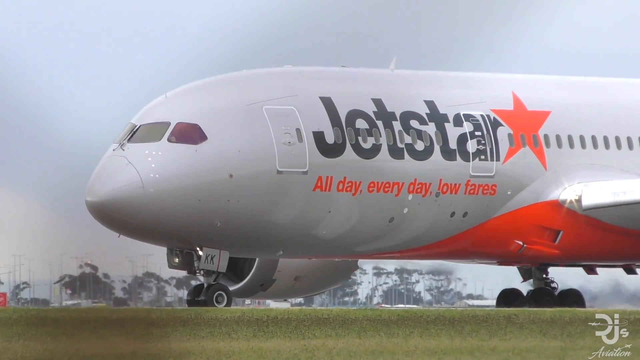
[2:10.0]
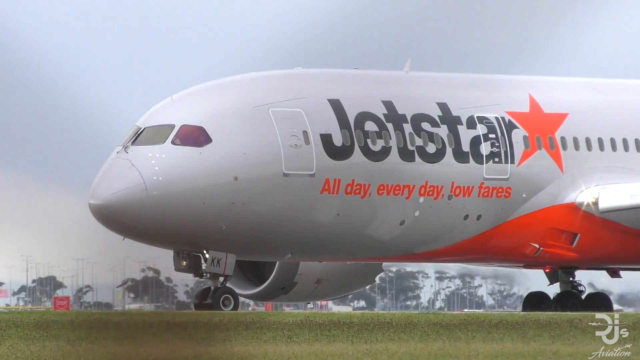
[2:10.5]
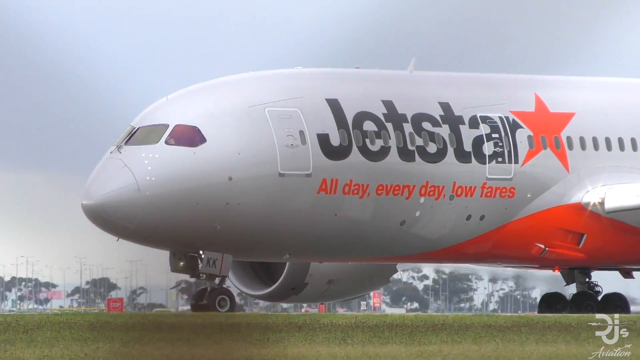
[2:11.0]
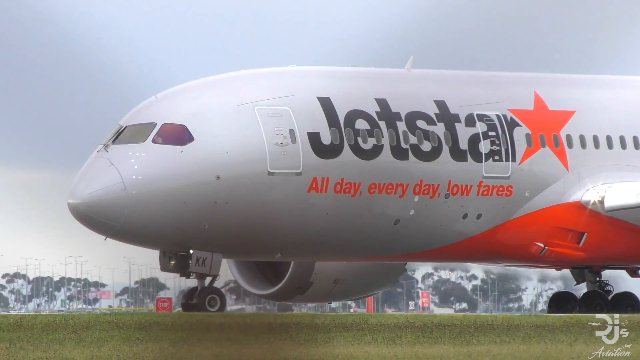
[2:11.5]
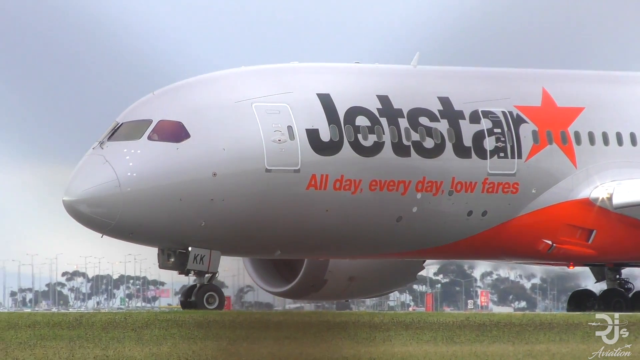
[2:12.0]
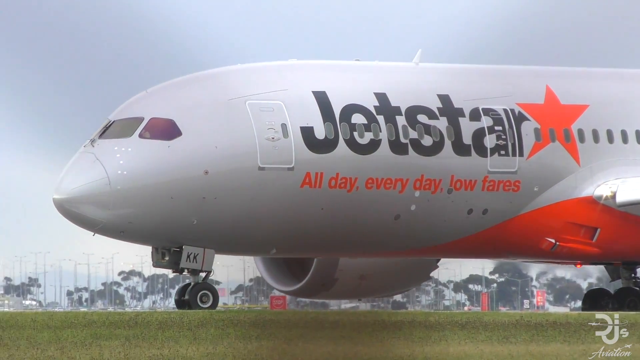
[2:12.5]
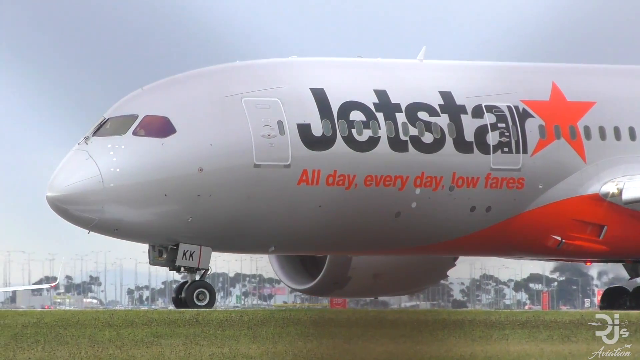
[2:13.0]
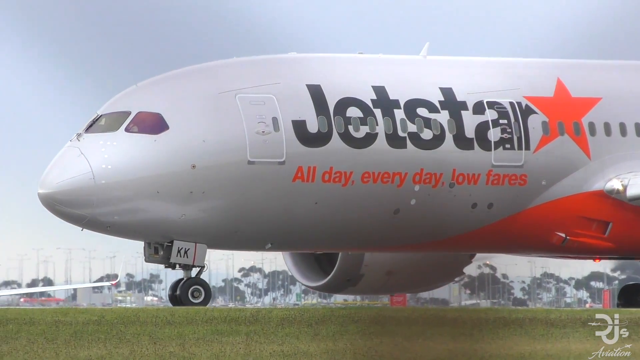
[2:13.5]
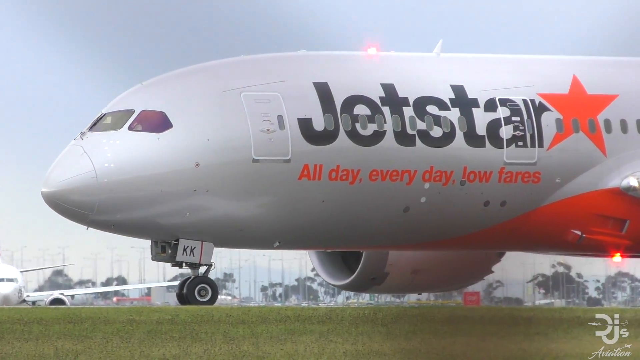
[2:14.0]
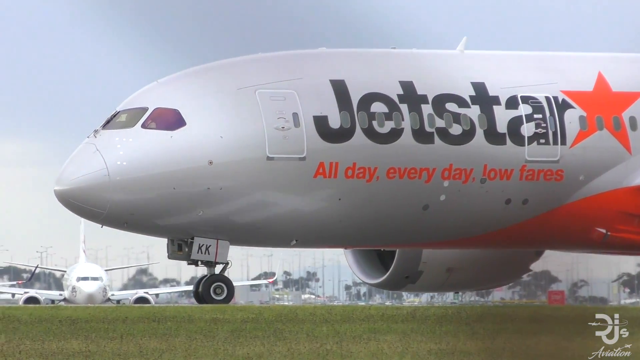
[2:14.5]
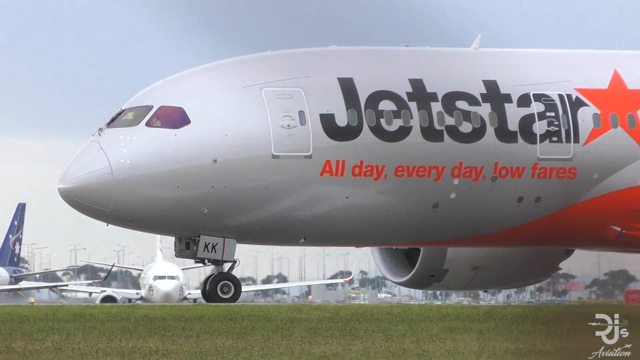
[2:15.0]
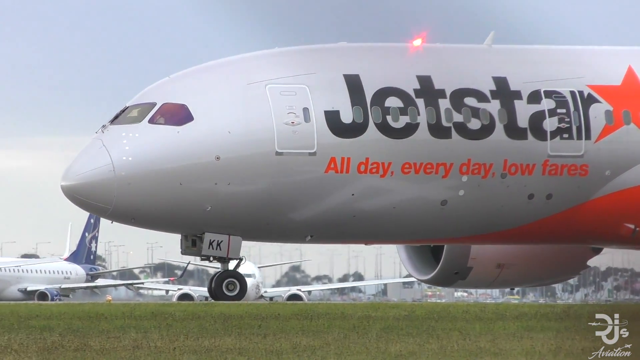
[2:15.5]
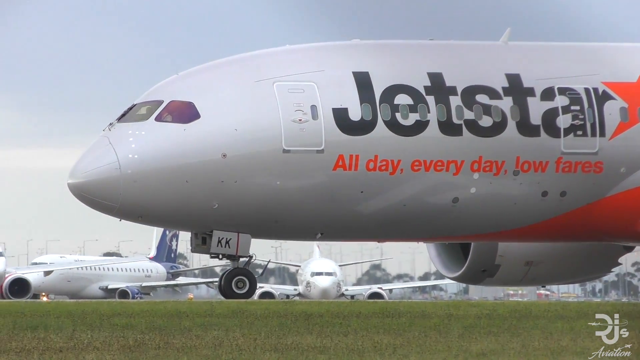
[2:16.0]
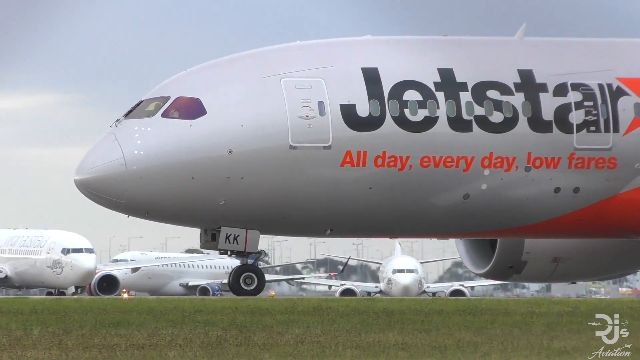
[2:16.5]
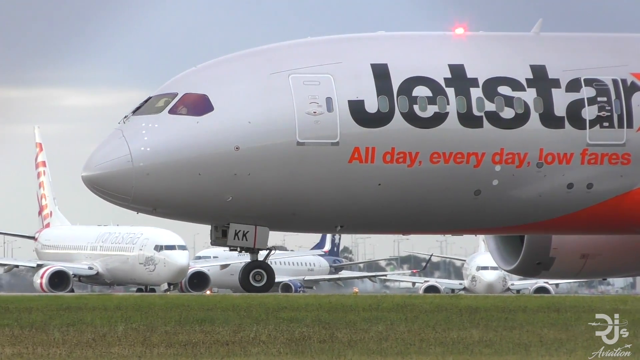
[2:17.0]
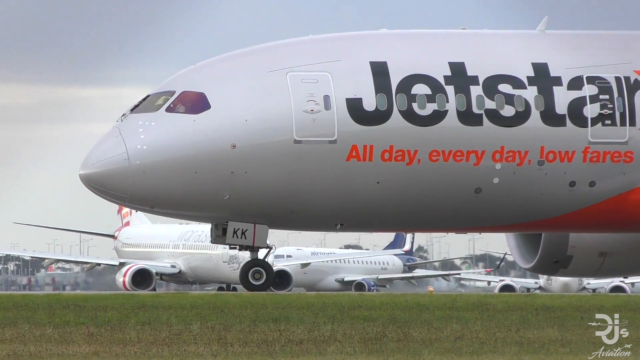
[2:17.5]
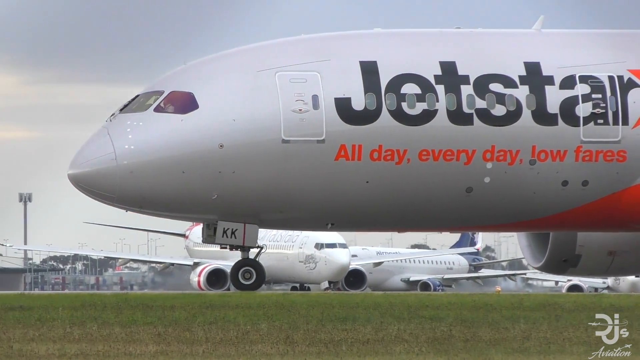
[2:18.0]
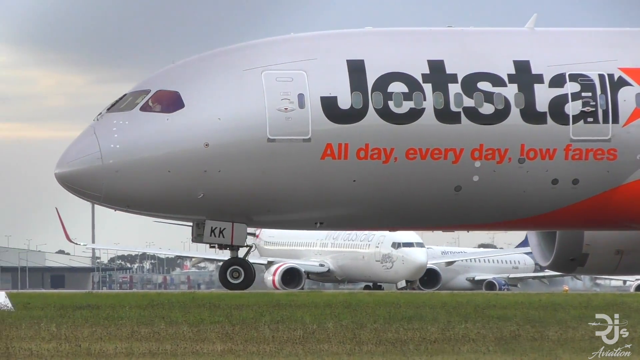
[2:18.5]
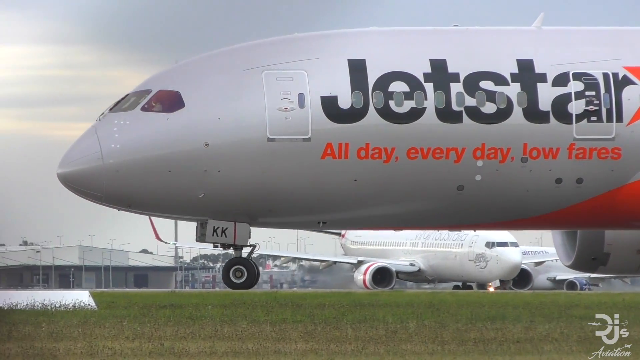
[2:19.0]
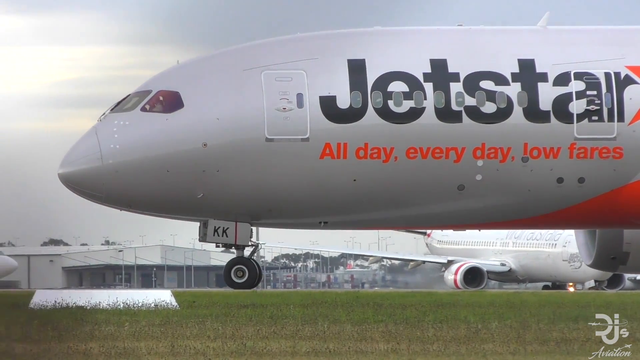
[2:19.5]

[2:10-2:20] The landing Jetstar aircraft is seen from a closer perspective. On its side is the Jetstar logo next to an orange star, with "all day, every day, low fares" underneath. The plane is gray with a kind of orange belly or underside. It slowly comes to a stop after landing, with several aircraft at the airport visible in the background. Red lights flash on the top and bottom of the airplane.